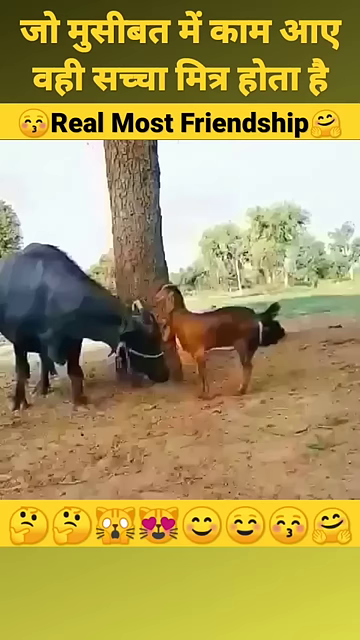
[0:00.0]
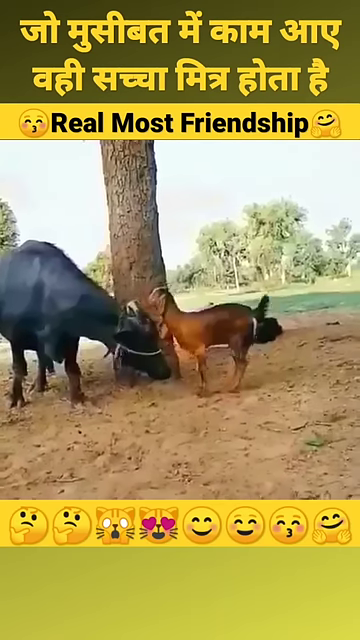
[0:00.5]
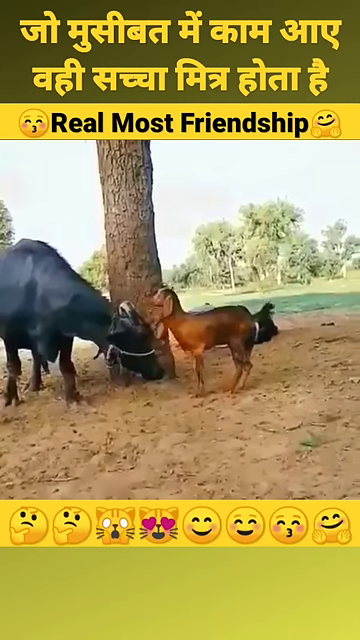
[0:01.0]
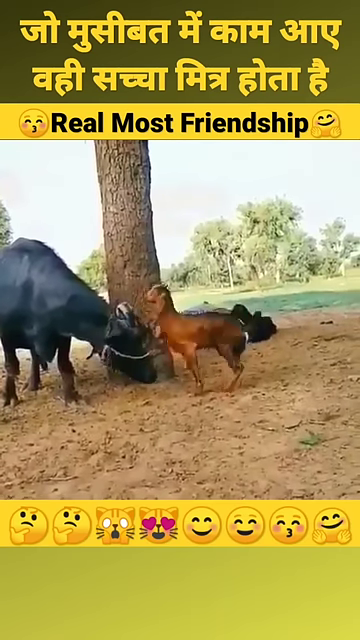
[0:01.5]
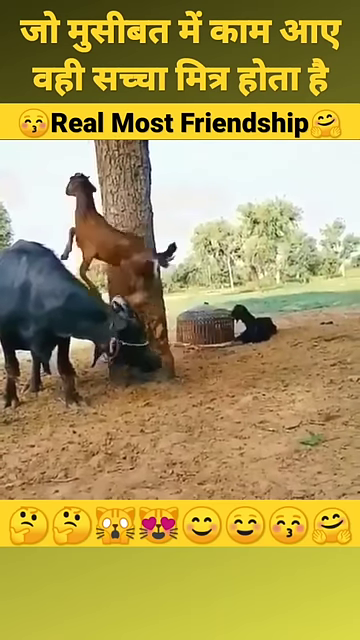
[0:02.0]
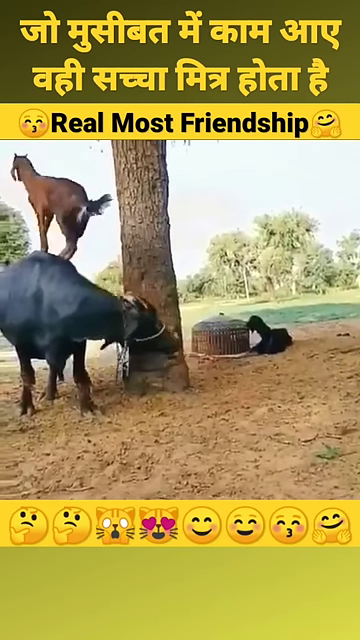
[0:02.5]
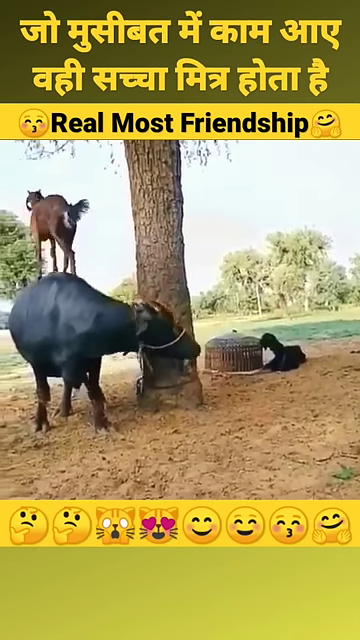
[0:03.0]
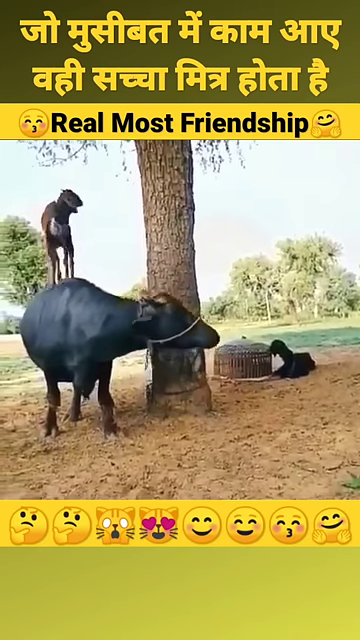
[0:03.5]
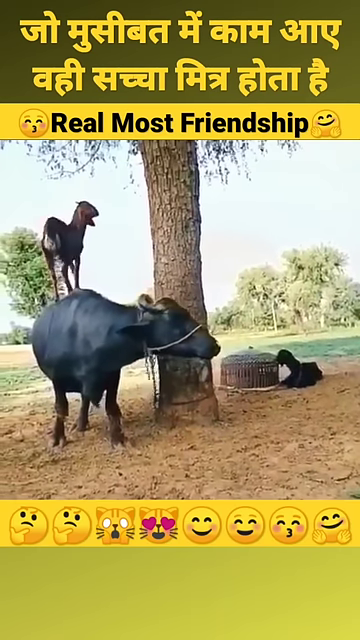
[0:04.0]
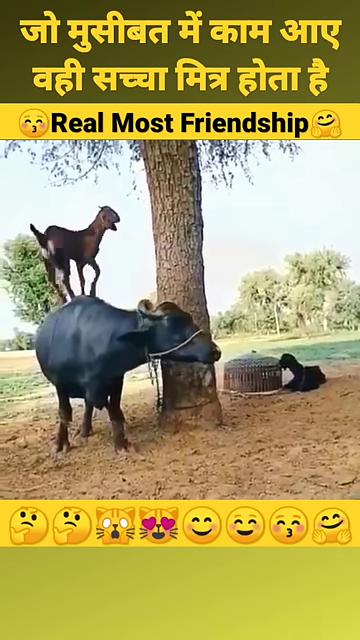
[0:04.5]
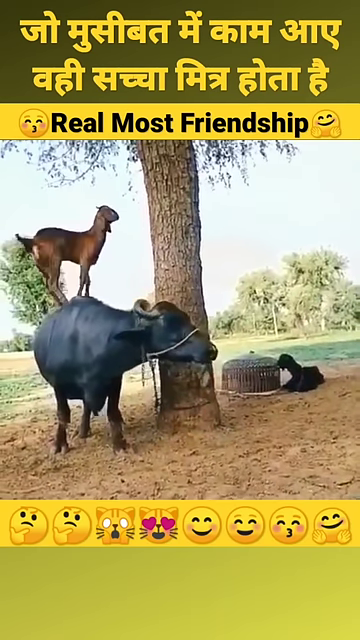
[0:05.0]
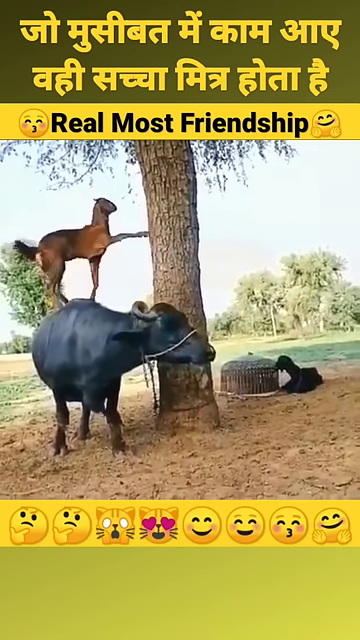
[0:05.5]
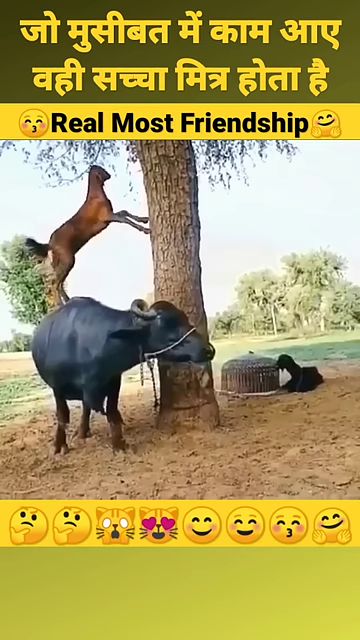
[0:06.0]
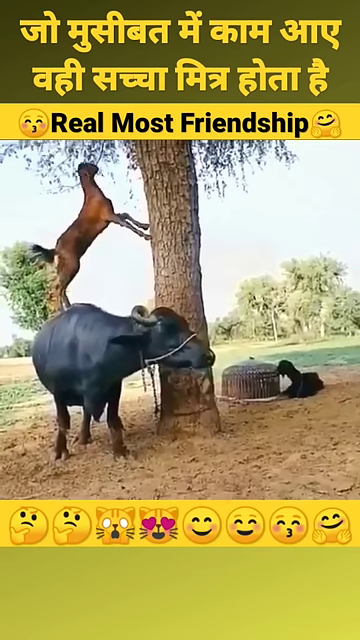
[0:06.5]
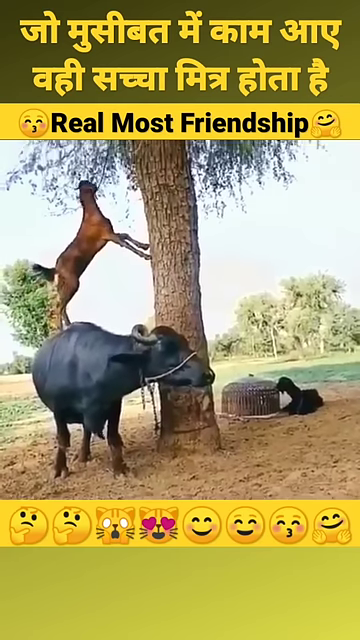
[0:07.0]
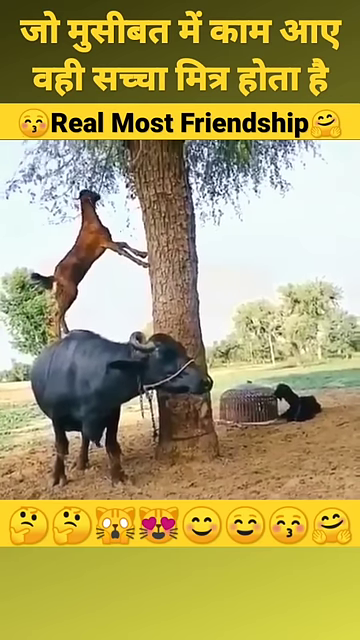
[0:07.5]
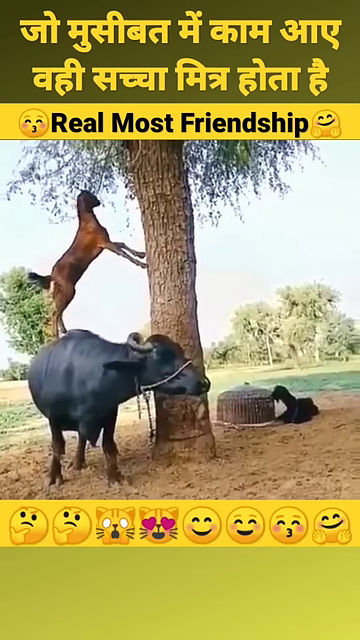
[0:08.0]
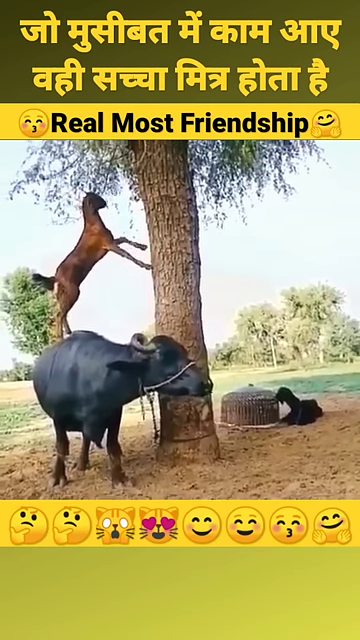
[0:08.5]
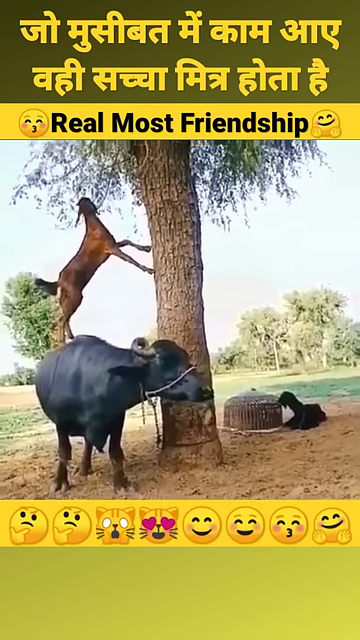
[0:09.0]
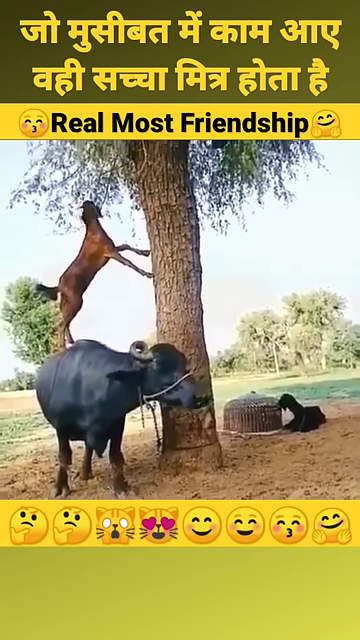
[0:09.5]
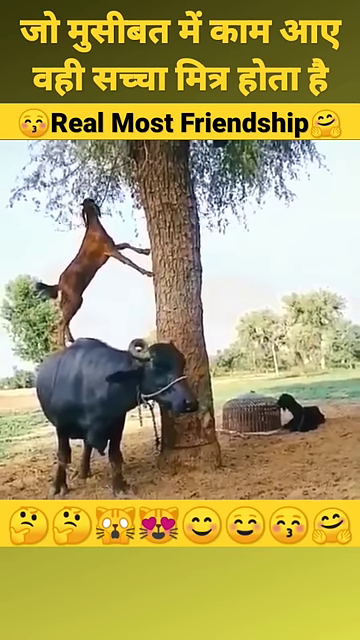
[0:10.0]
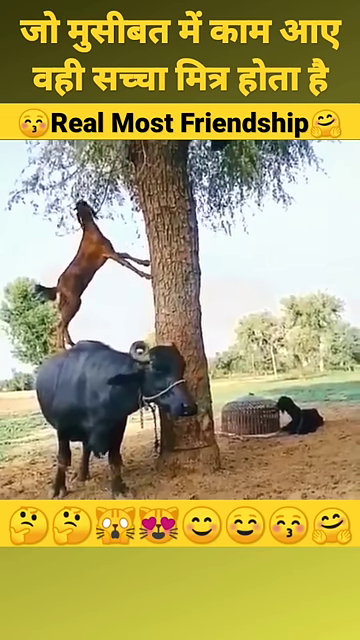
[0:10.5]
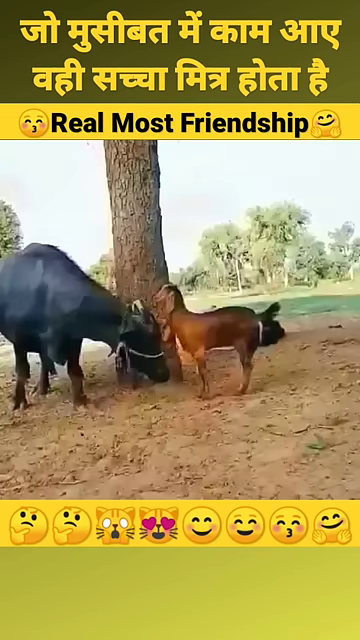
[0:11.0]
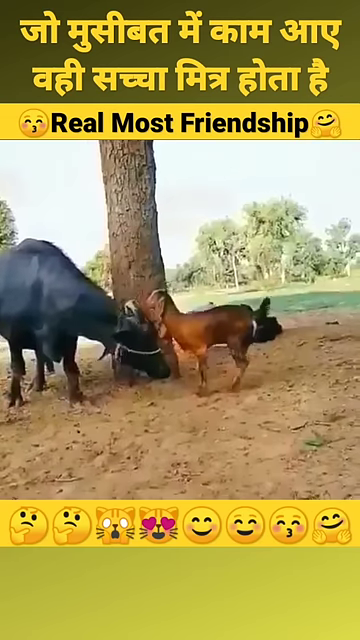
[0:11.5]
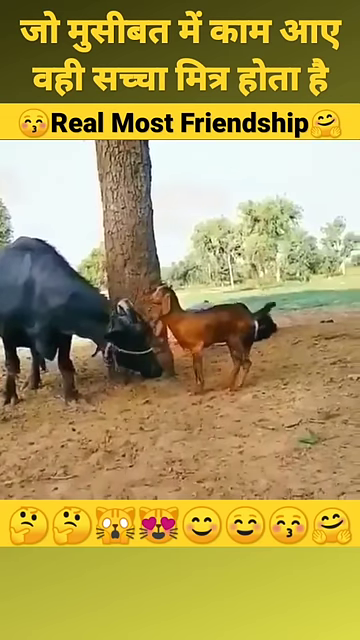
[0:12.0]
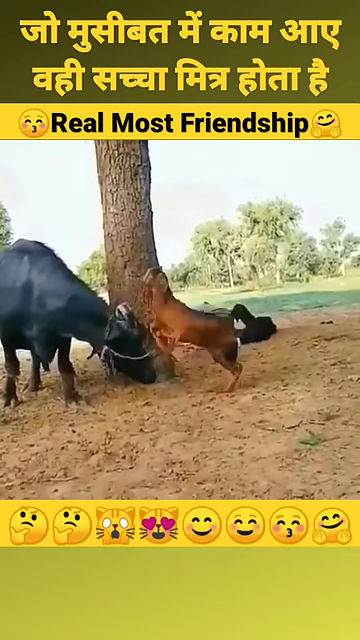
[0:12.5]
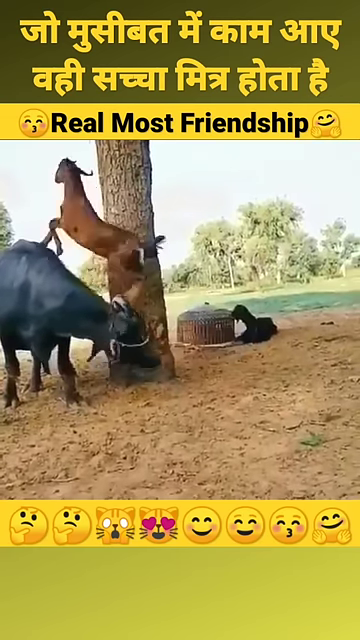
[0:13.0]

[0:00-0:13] A black cow and a brown goat stand next to each other beside a tree. The cow has its head down, and the goat climbs up onto the cow's head and neck and then onto its back, as if the cow wants the goat to get up there. Big, tall trees are in the background, and one tree is very close to the two animals. Once on the cow's back, the goat also leans up against the tree to get an even higher view. Text on the screen includes the word "Friendship" along with a bunch of emojis, including happy, kissing and hugging emojis.